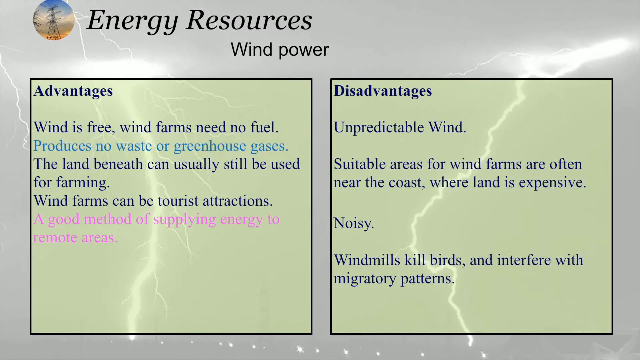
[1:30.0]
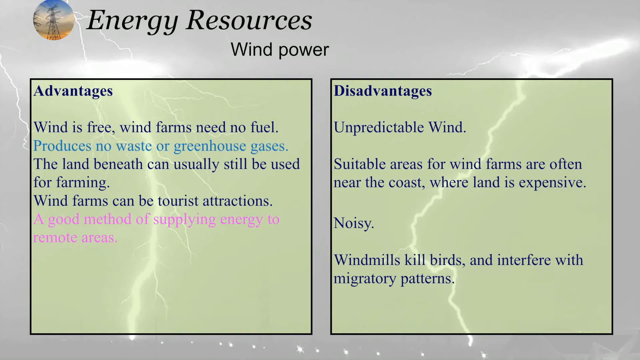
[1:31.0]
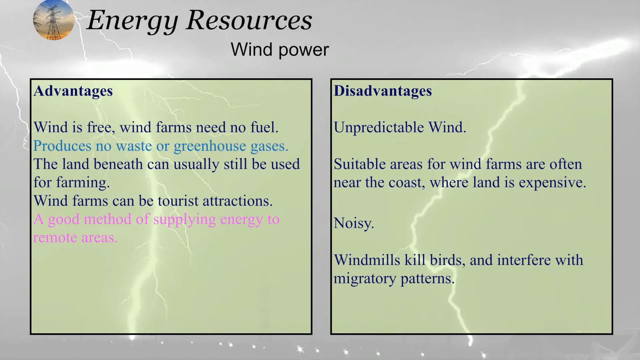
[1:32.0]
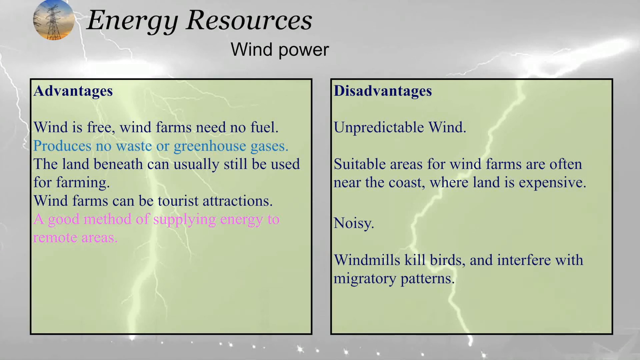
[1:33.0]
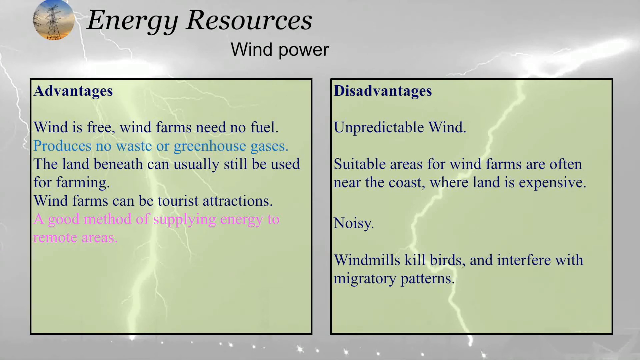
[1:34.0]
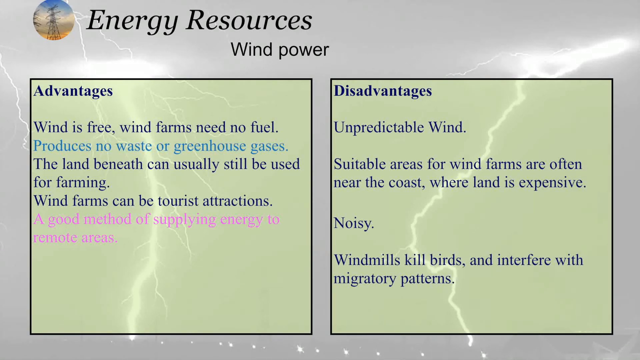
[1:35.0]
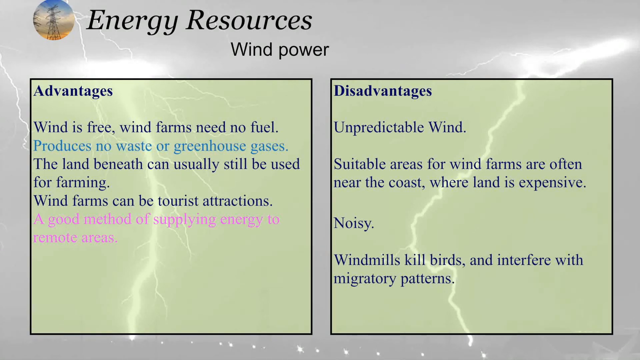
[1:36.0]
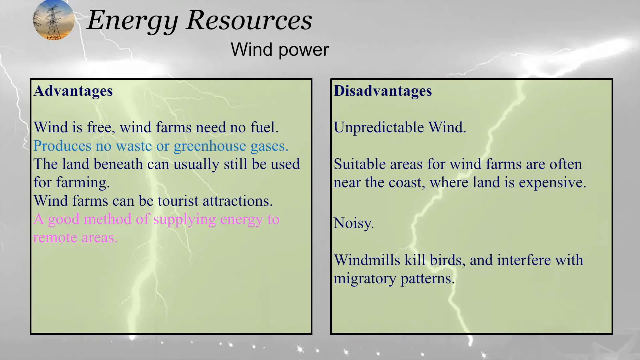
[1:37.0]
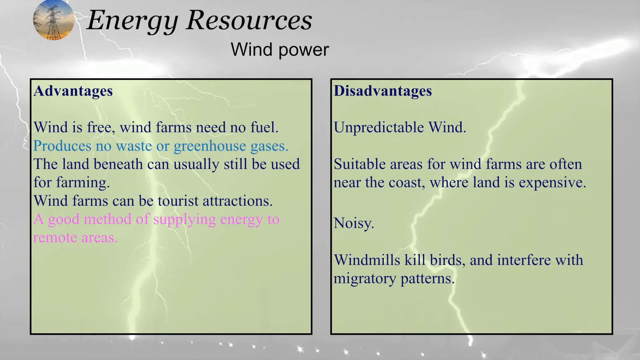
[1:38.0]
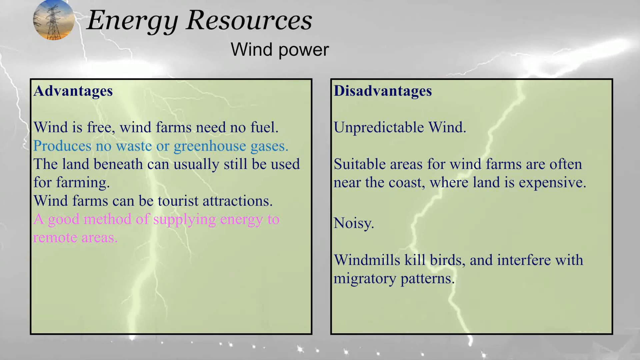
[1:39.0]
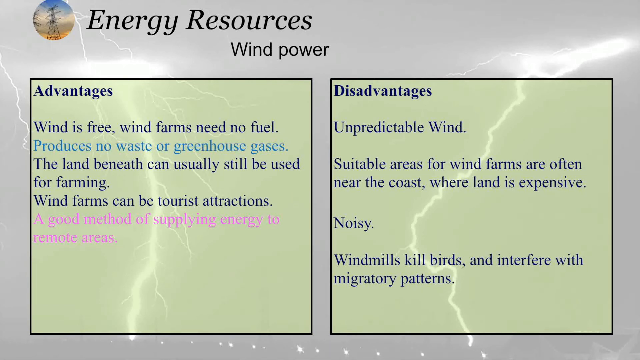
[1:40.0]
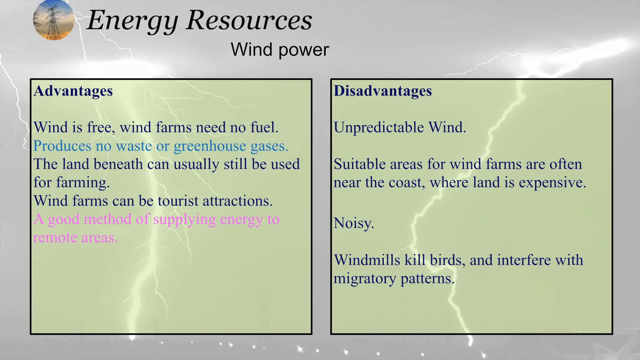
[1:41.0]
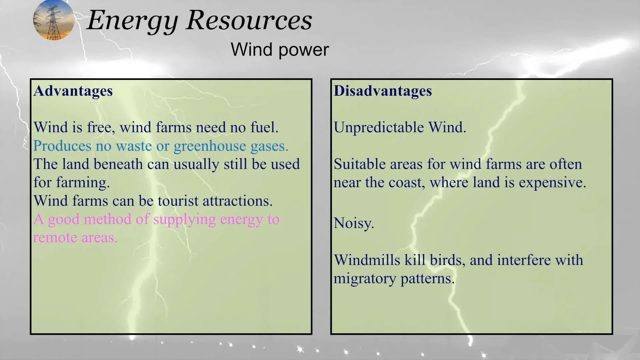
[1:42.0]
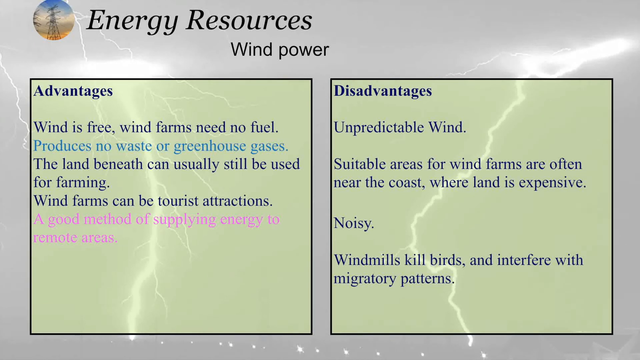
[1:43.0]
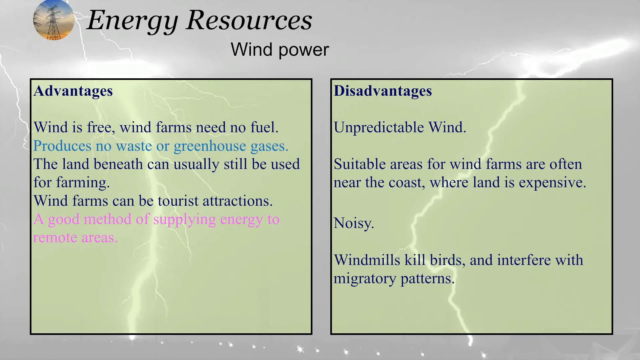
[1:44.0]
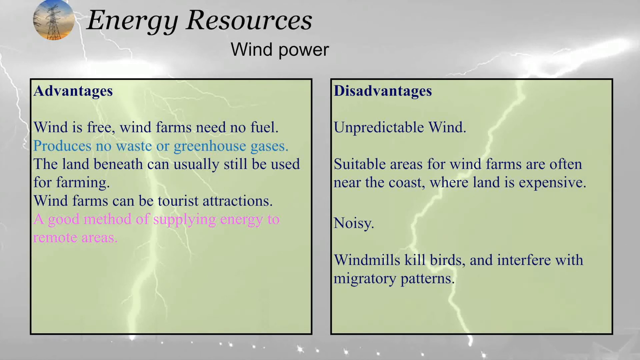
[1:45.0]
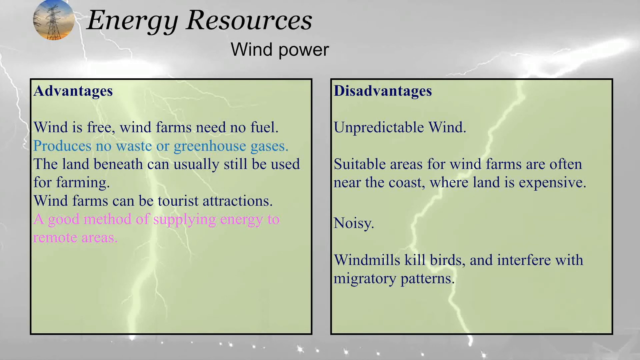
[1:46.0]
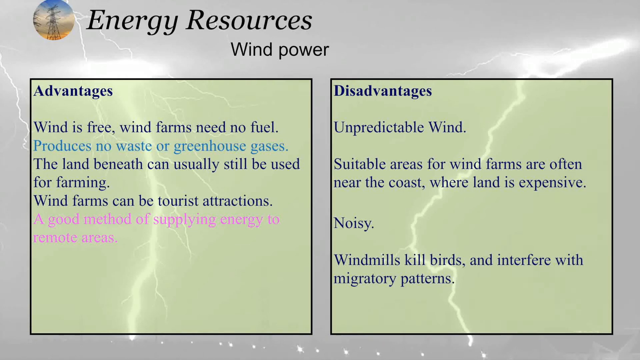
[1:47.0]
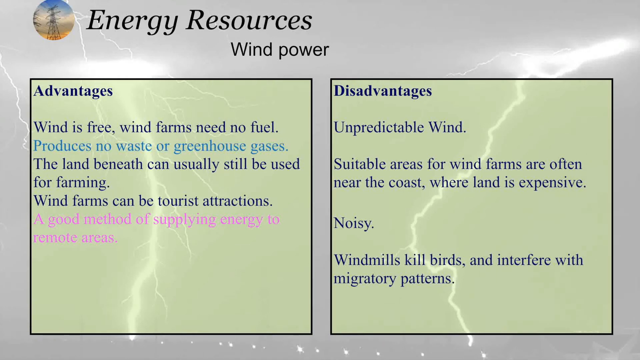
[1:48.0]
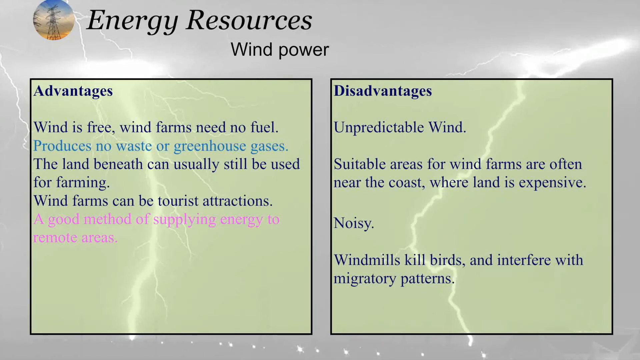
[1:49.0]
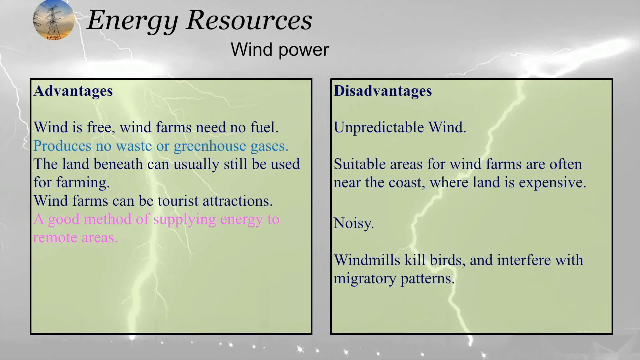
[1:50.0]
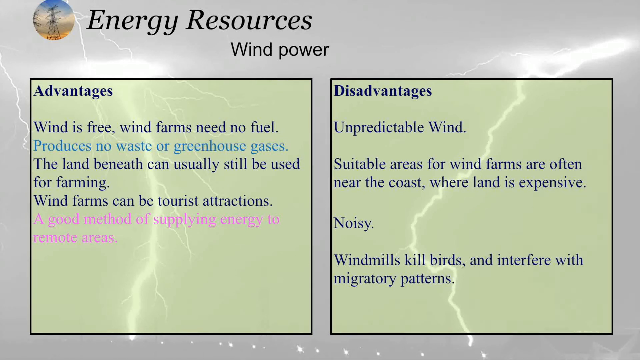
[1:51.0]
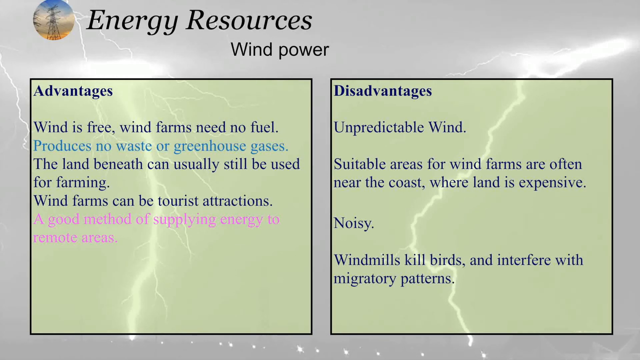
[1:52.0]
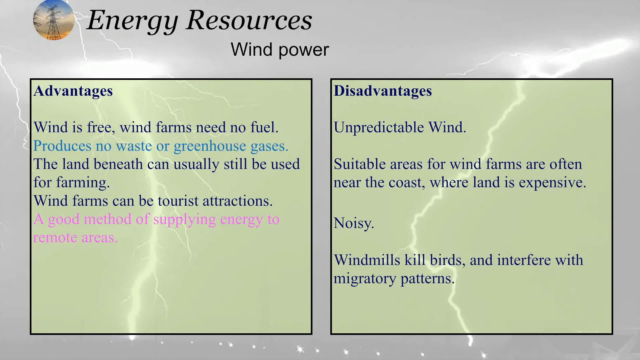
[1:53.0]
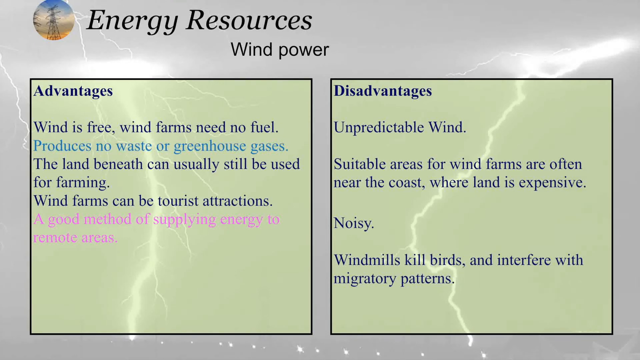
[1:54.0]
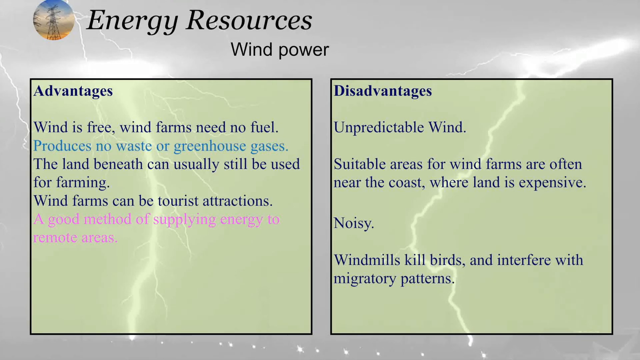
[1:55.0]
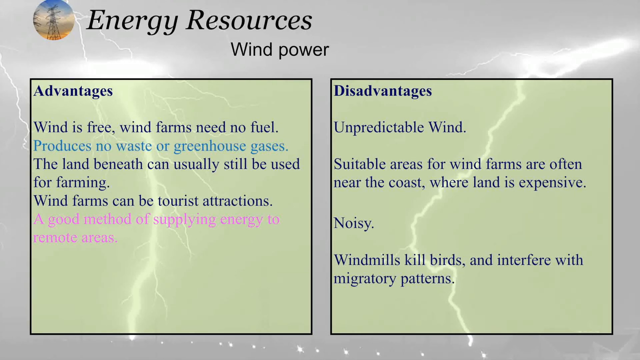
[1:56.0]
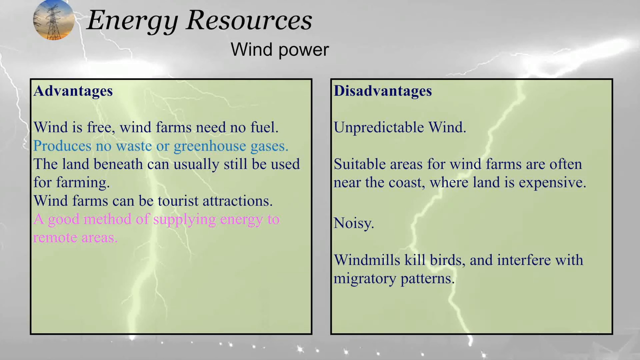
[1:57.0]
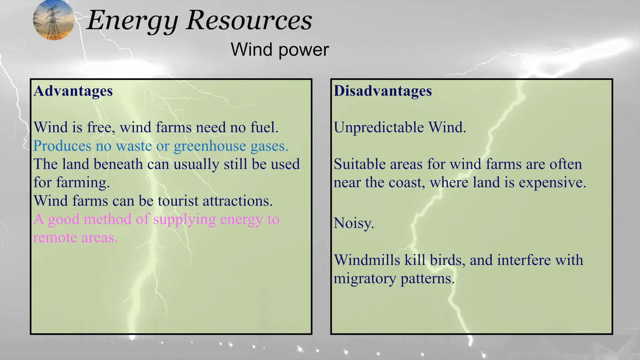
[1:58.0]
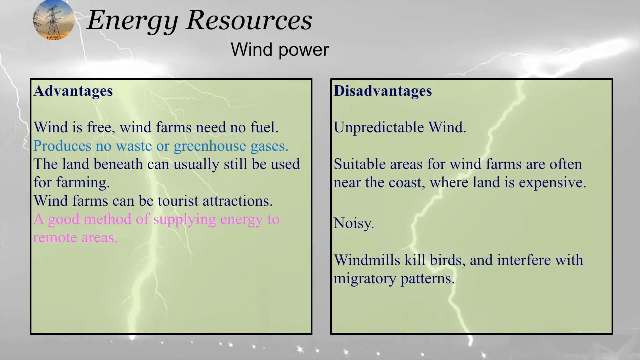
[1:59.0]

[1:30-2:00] The background is still the gray, stormy sky. The lightning strike on the left is thin coming in from the top and slightly from the left for about two inches, then big and thick going all the way down to the bottom, with small strikes branching off it. The one on the right is big and thick at the top, with one small branch going left, and the rest is one big strike zigzagging back and forth down to the bottom. In the top left corner is the profile icon of the giant metal electrical tower, with "energy resources" in big black lettering to its right and "wind power" beneath "resources." There is a big square on the left and a big square on the right with black borders; their background is light green, and the lightning is still visible through them. The left one says "advantages" in black, followed by "wind is free," "wind farms need no fuel," "produces no waste or greenhouse gases," "the land beneath can usually still be used for farming," and "wind farms can be tourist attractions," all in black, and then in pink "a good method of supplying energy to remote areas." The right one says "disadvantages" in black, with the rest also in black: "unpredictable wind," "suitable areas for wind farms are often near the coast where land is expensive," "noisy," and finally "windmills kill birds and interfere with migratory patterns."